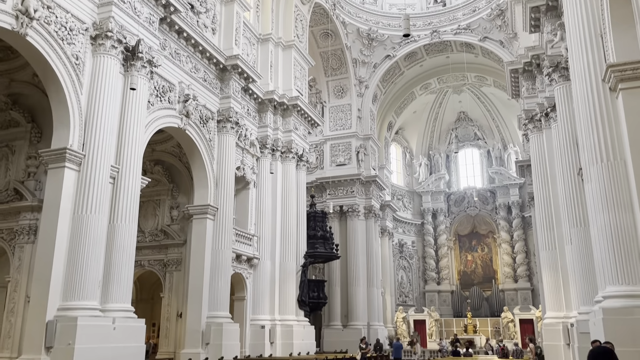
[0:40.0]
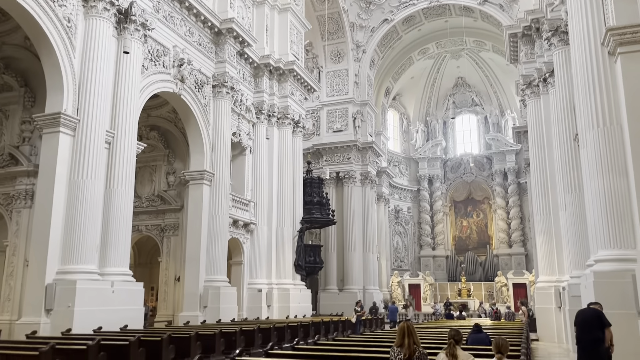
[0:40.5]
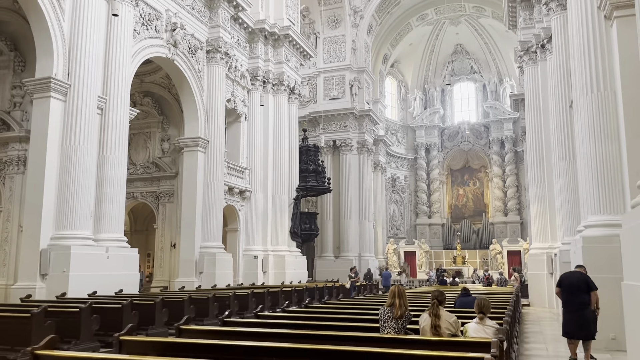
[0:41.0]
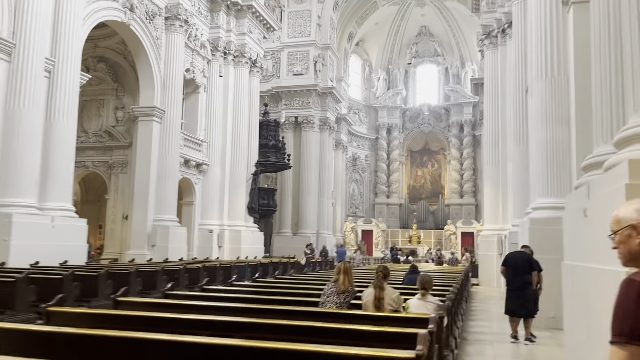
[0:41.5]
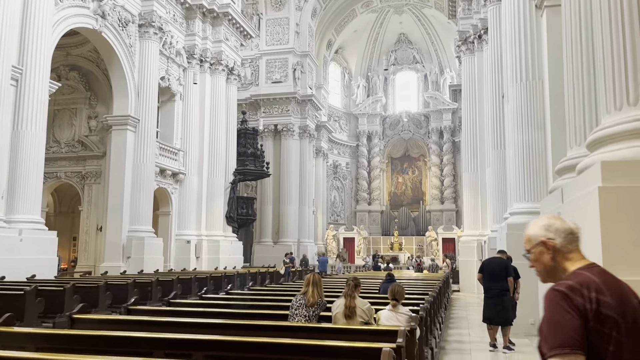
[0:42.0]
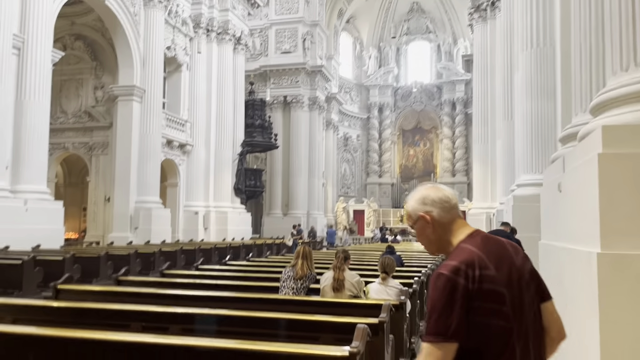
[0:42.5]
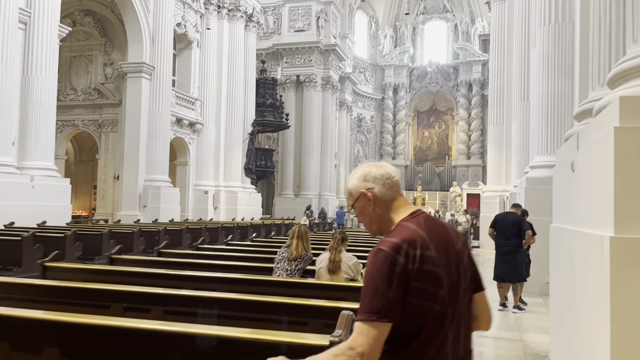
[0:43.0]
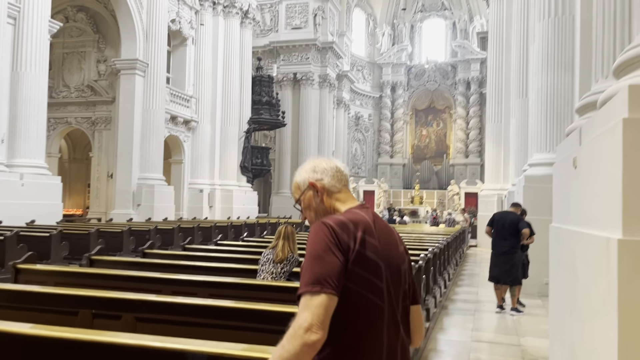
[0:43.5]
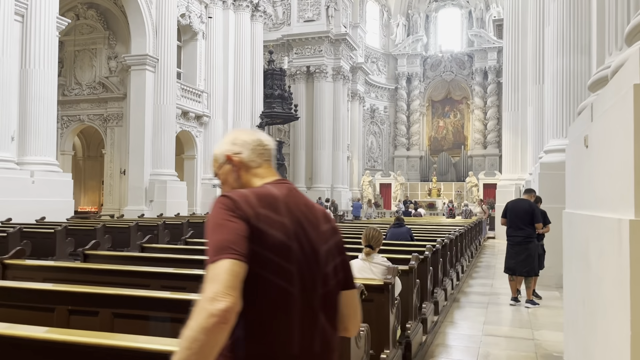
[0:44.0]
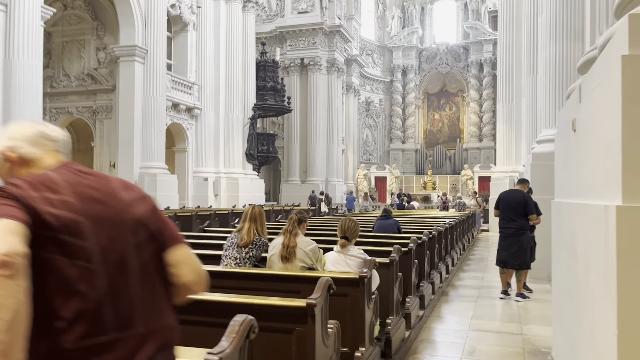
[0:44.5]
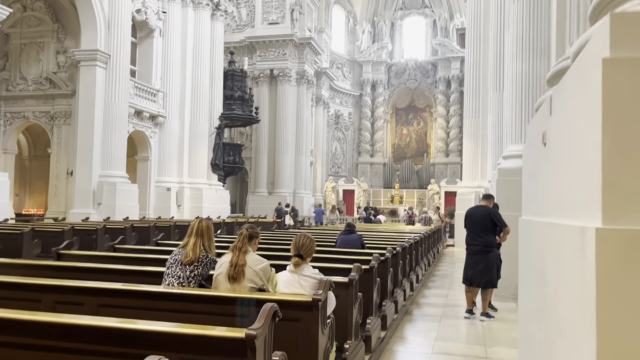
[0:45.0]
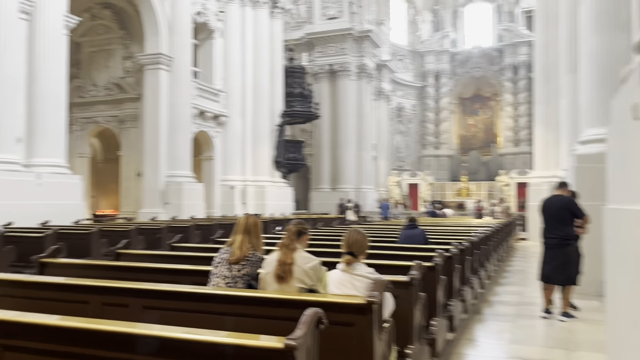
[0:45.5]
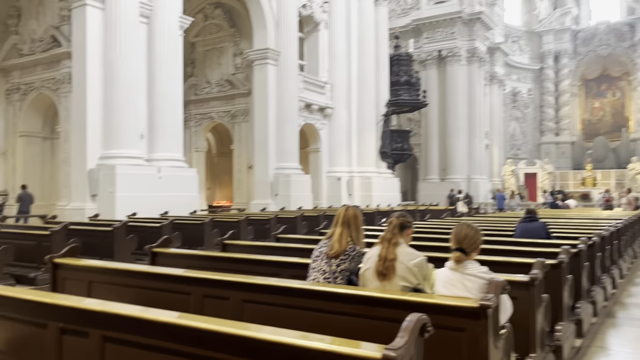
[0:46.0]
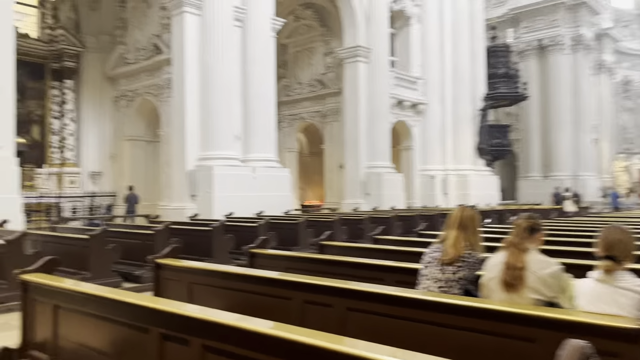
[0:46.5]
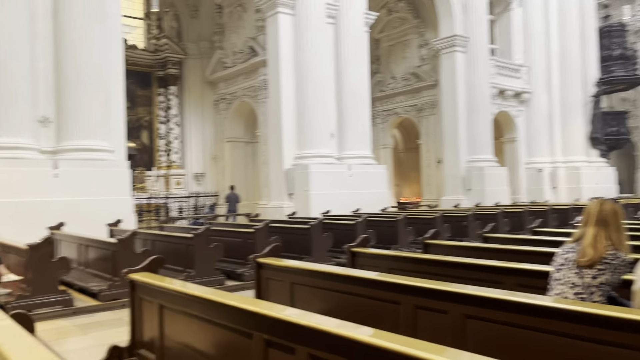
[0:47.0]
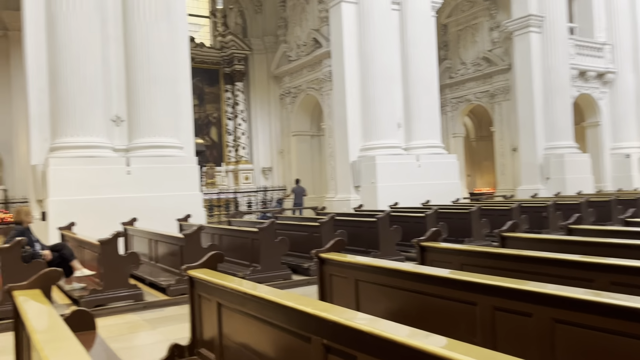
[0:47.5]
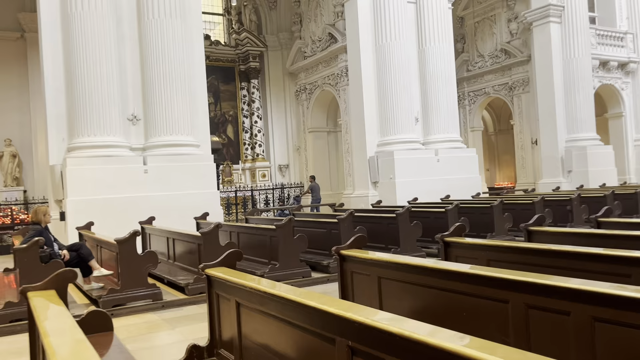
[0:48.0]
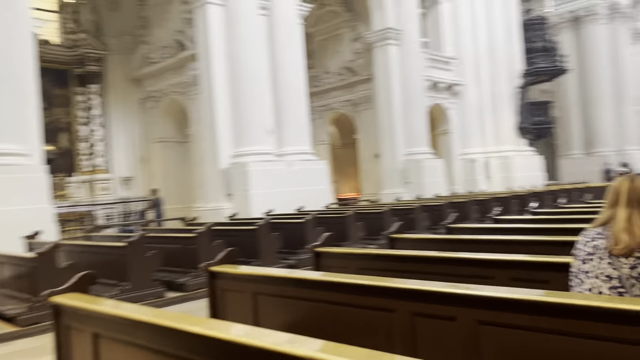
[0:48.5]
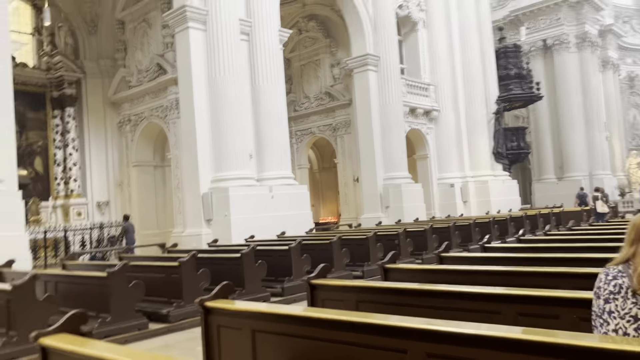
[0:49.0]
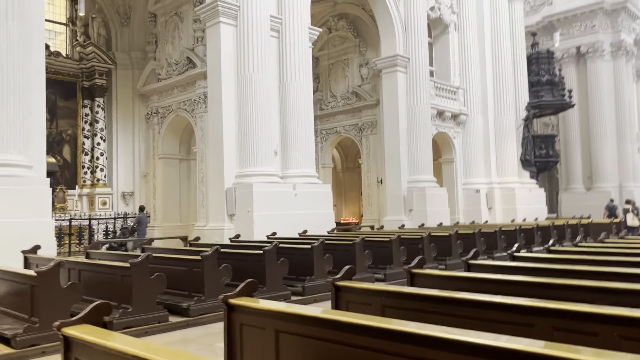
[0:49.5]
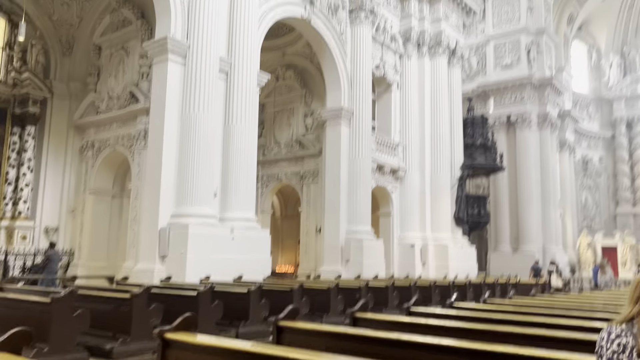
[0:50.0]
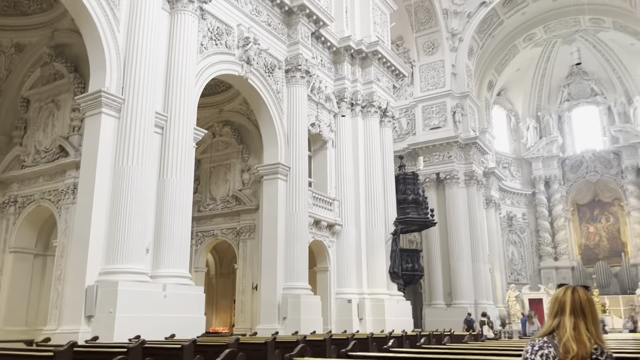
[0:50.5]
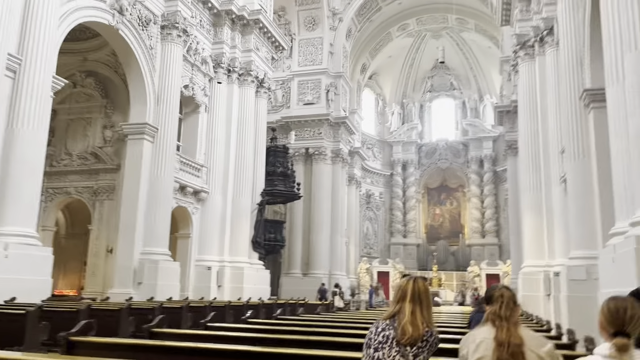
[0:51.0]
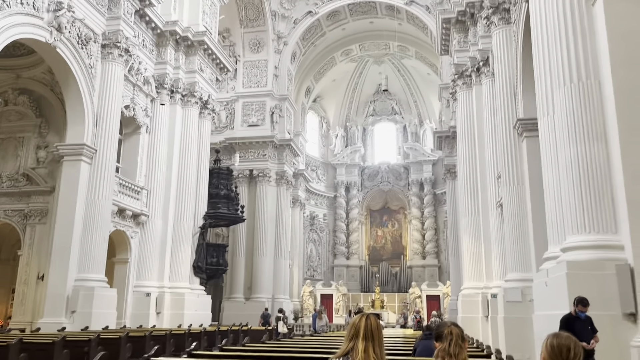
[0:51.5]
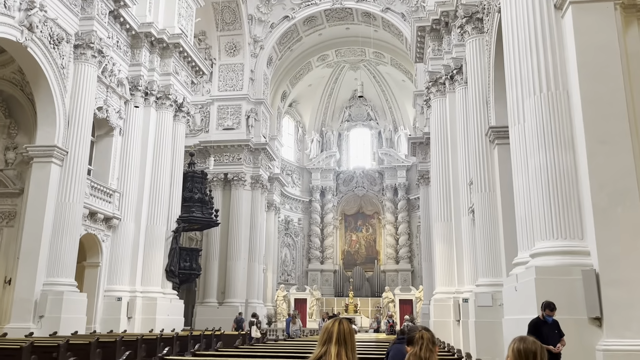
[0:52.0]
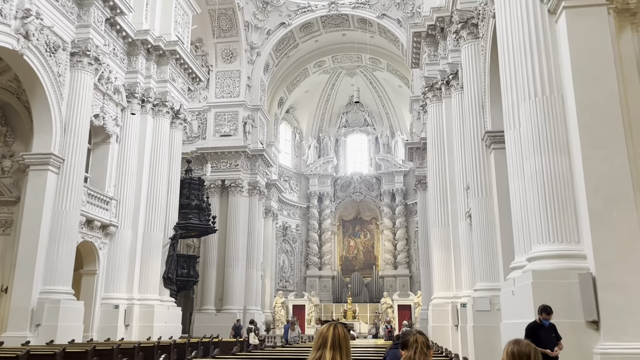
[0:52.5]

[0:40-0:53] A cathedral has marble floors, wooden pews and stone columns that look like they are carved out of the wall, some of them carved into the wall. The ceiling is very high, and there is an arch at the front. There are windows as well. Another level is up top, at the top of the tallest arch, and it appears to have a banister around it. At the stage or podium it looks like there is gold, and the stonework there is elaborately carved as well.